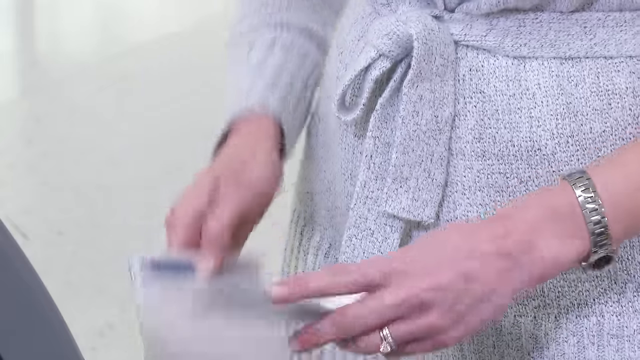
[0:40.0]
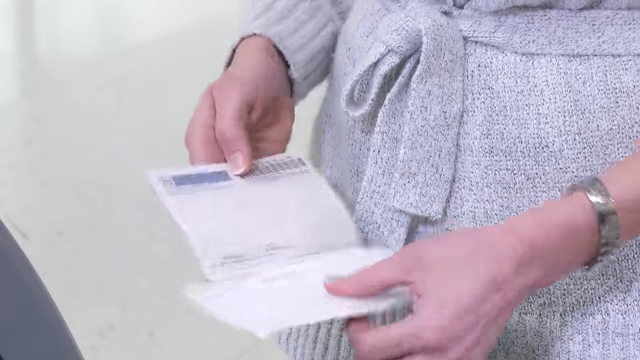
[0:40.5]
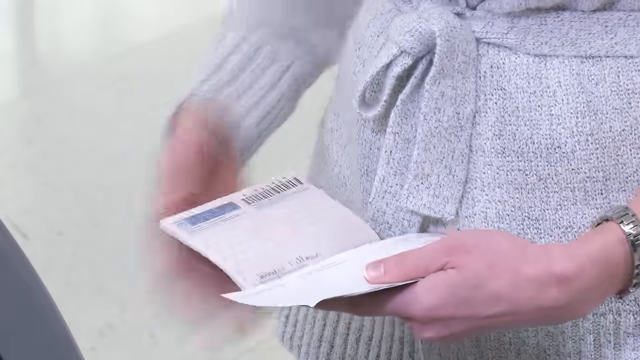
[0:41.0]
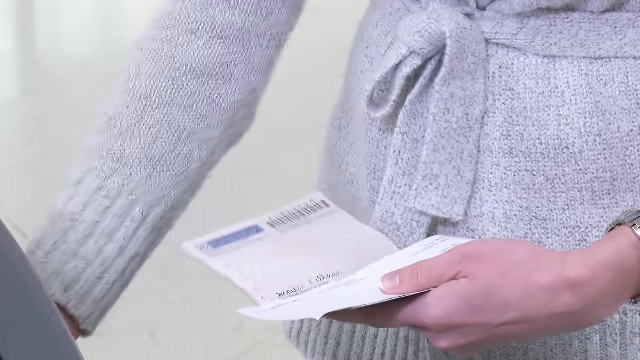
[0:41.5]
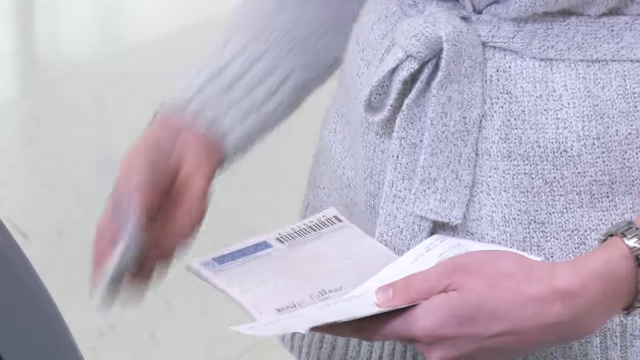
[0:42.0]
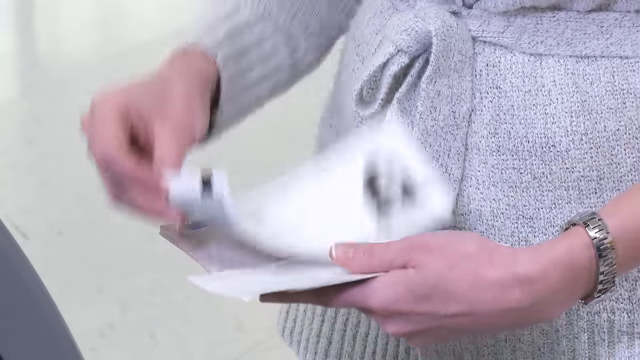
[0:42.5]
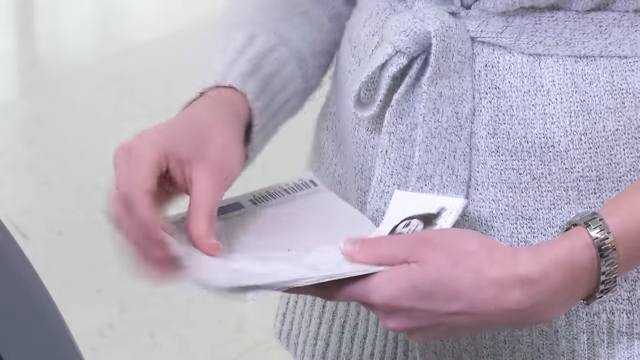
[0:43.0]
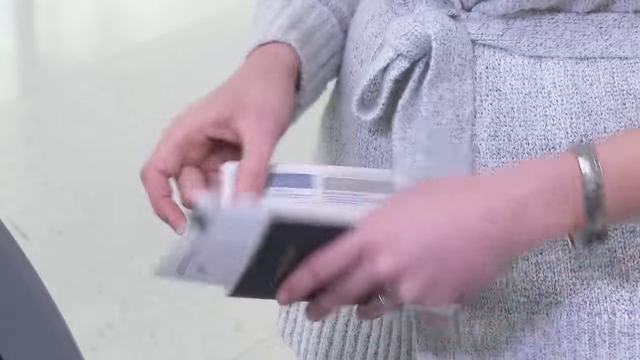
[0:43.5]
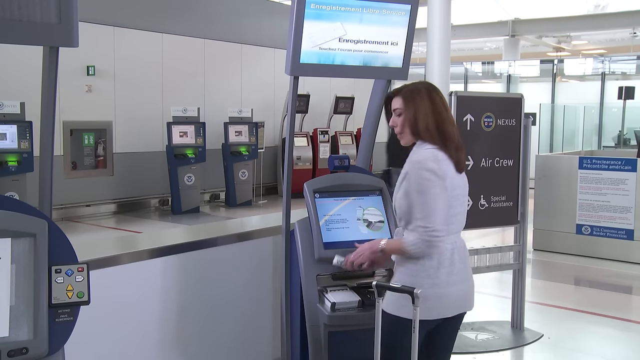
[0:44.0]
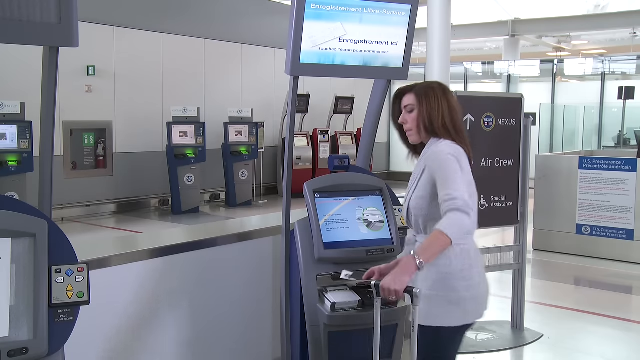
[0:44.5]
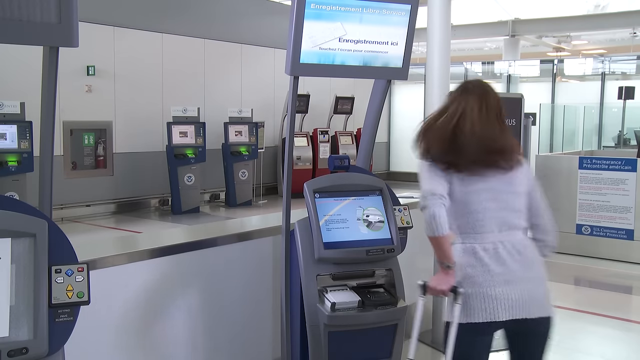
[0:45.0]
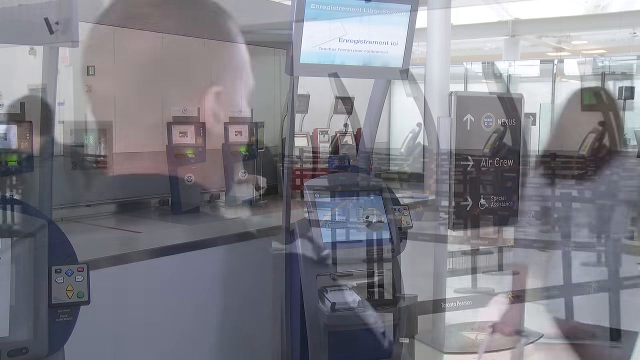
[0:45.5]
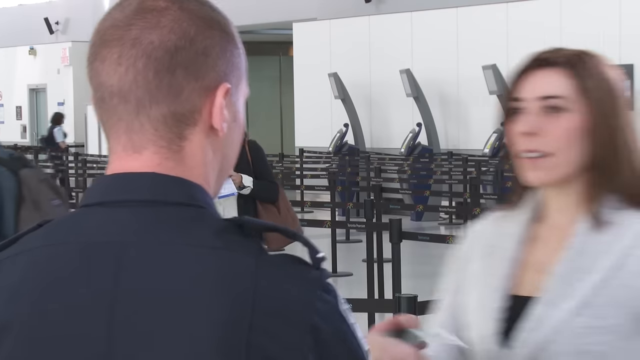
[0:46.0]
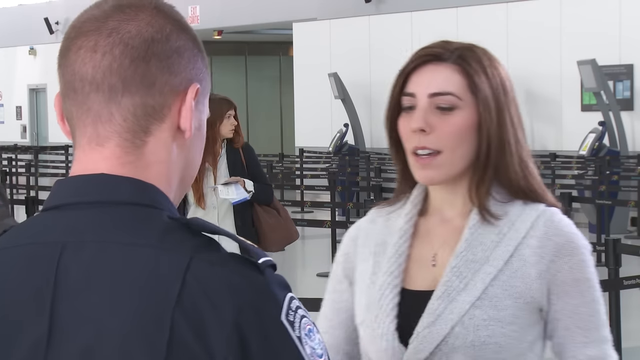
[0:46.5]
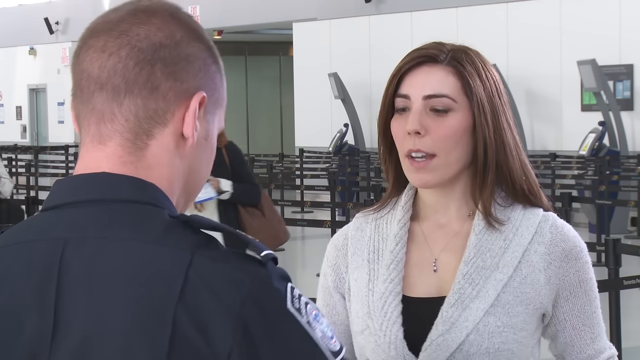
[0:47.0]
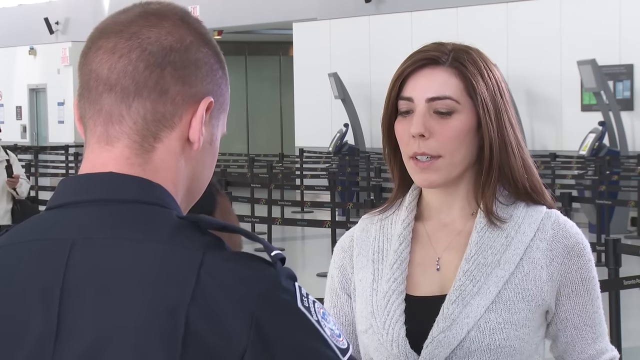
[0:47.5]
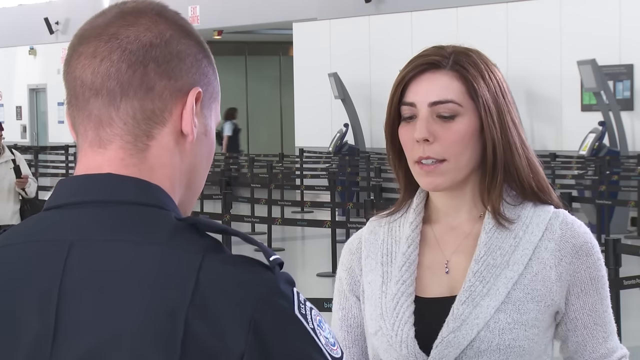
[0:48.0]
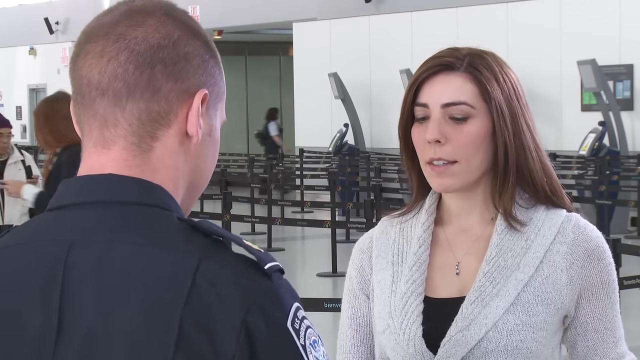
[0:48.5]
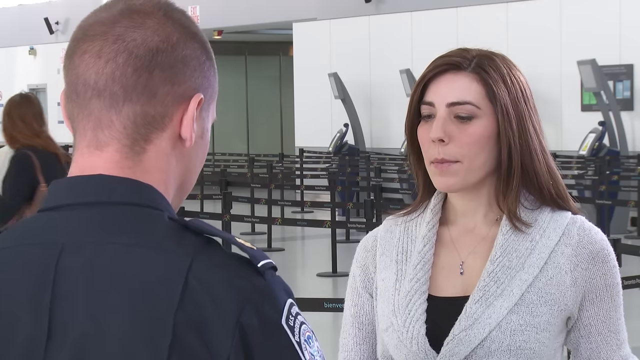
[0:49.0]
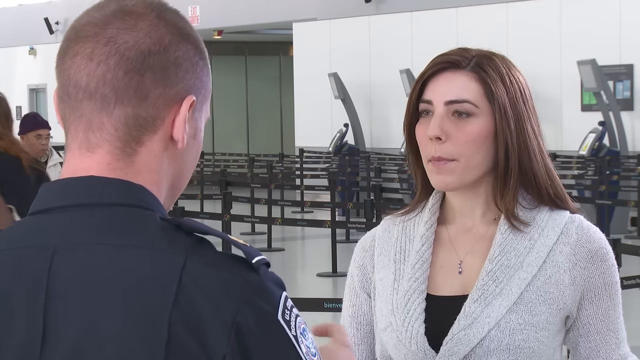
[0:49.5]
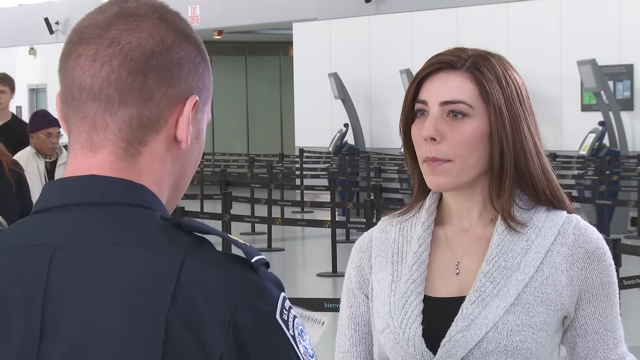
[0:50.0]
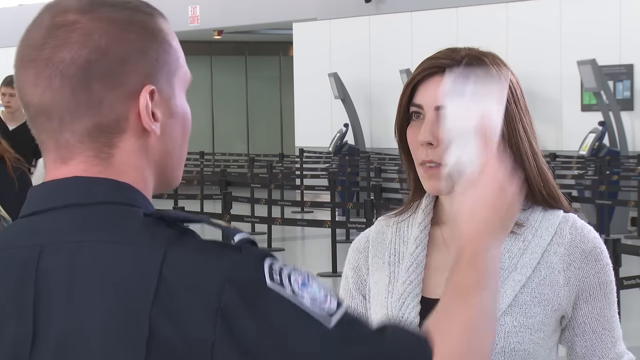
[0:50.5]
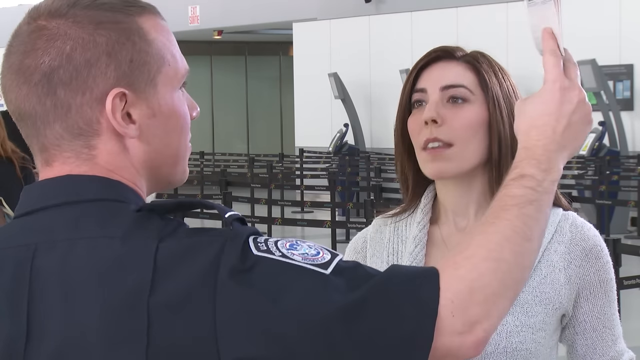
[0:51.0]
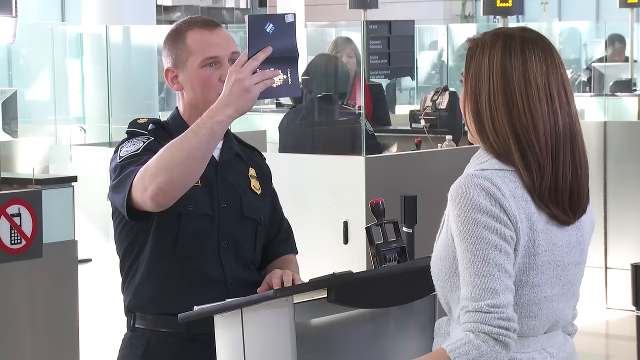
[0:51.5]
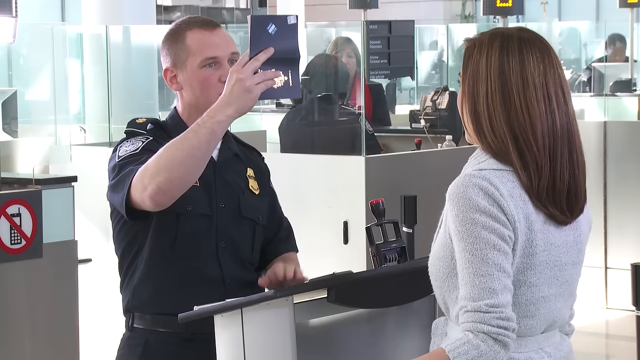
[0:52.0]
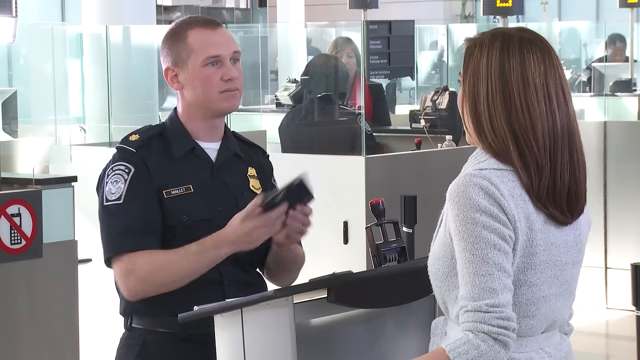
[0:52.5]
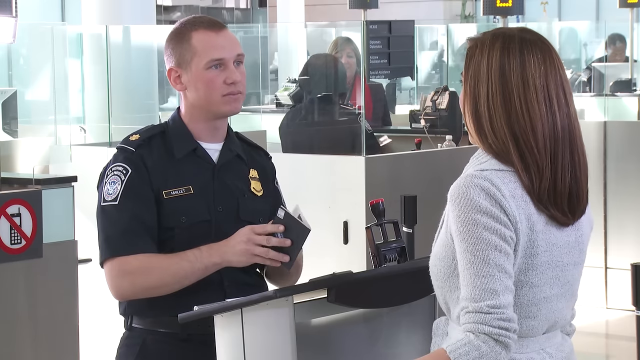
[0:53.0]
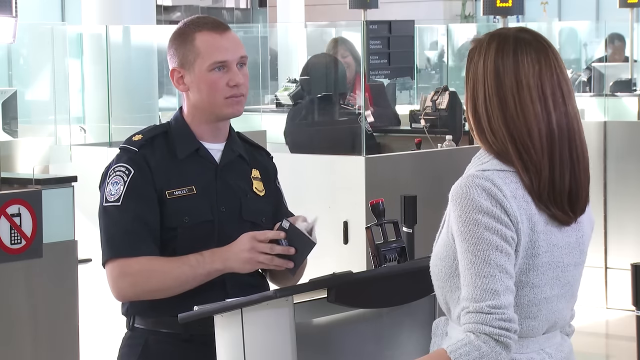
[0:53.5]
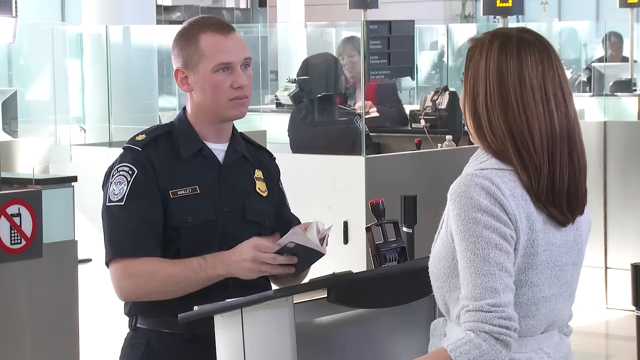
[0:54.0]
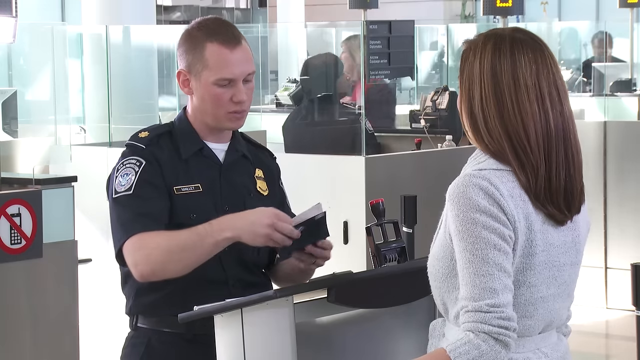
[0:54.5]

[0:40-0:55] The woman takes the slip of paper the machine printed out, tucks it into her passport, closes it and walks away. She then approaches a TSA security agent, who takes the paperwork and looks it over while she talks to him; the back of his head is visible. He is a Caucasian man, apparently in his late 20s to mid-30s at most, with a kind of buzz cut, blonde hair and blue eyes, wearing a typical security police officer-looking uniform. Other agents are in the back, along with other people going about their business. He looks over the information, talks to her, and lifts up the passport to compare the photo to the woman standing in front of him. The two exchange words in a formal but friendly interaction, not a chatty conversation, while she pulls her luggage along.